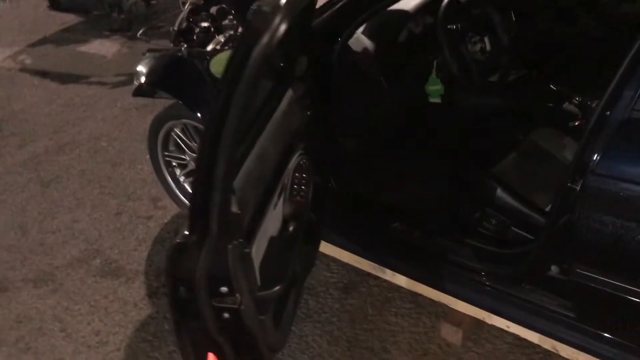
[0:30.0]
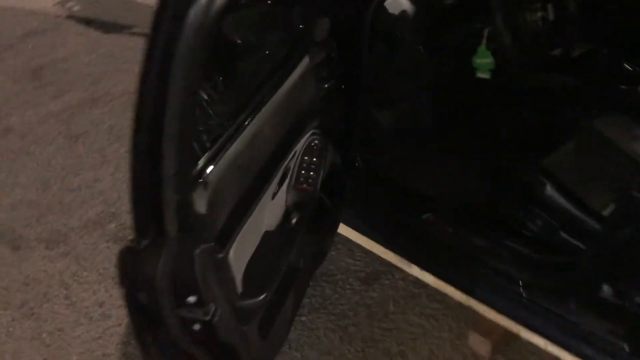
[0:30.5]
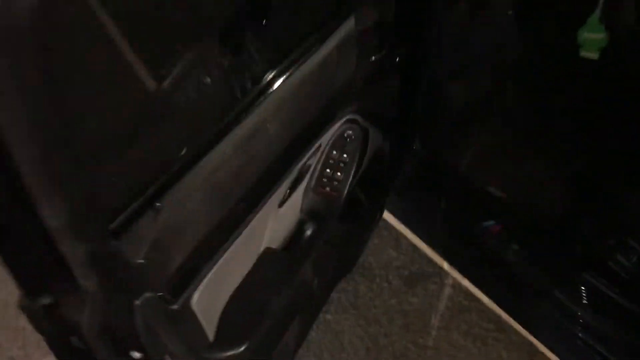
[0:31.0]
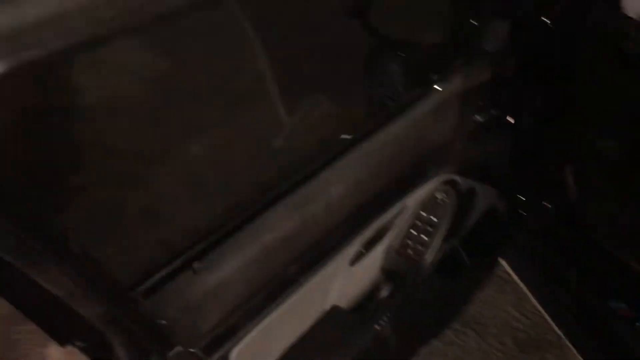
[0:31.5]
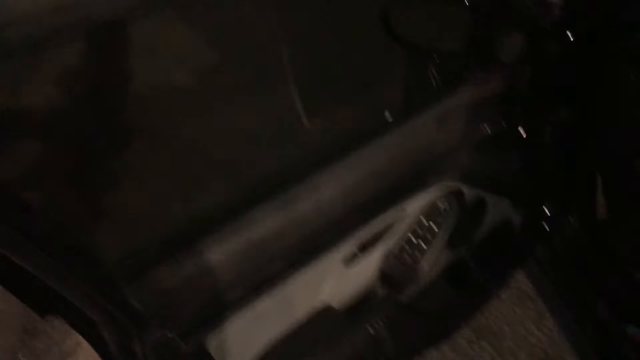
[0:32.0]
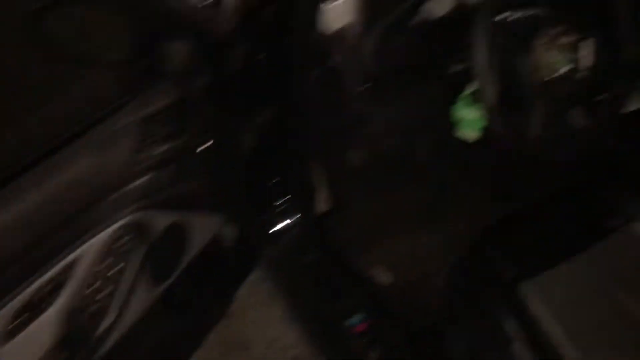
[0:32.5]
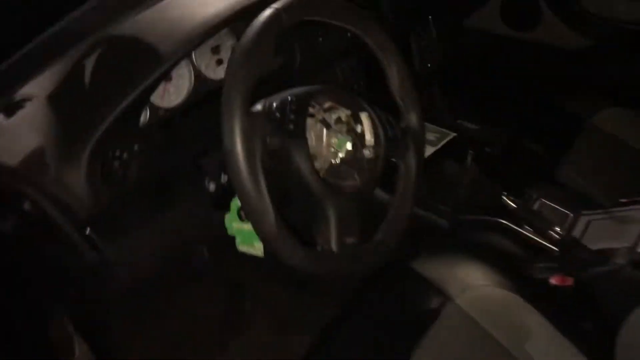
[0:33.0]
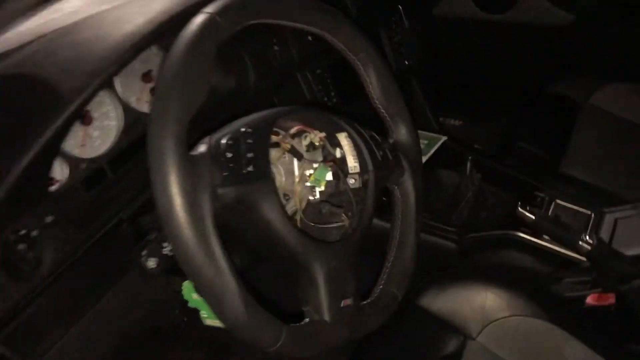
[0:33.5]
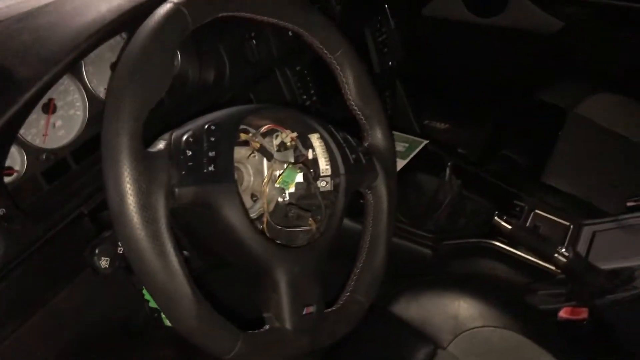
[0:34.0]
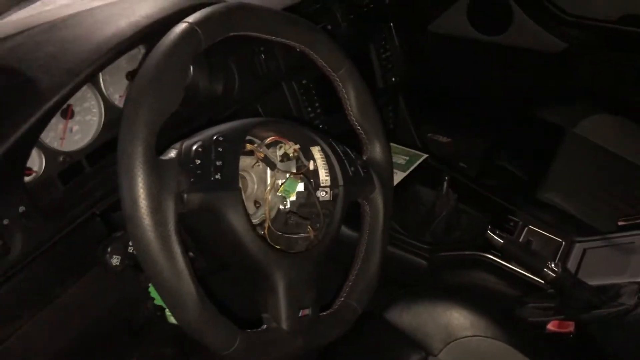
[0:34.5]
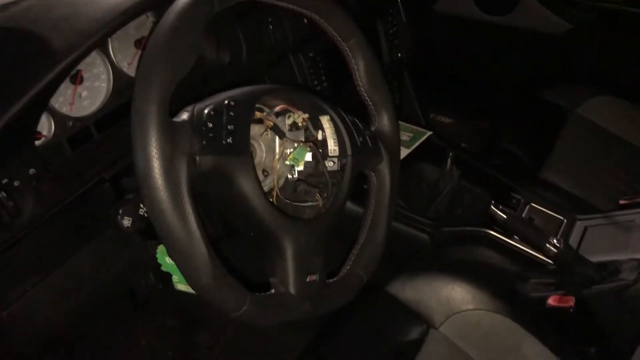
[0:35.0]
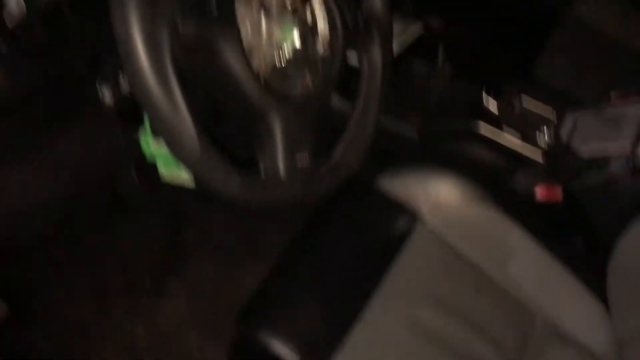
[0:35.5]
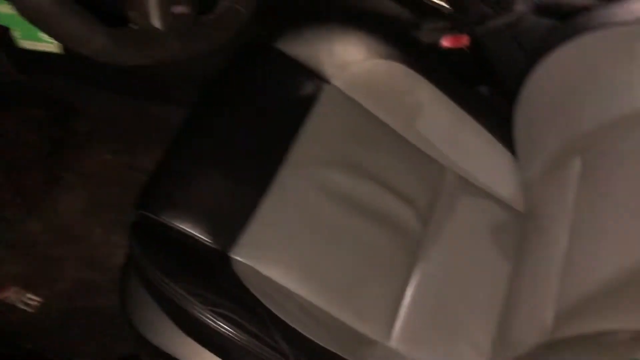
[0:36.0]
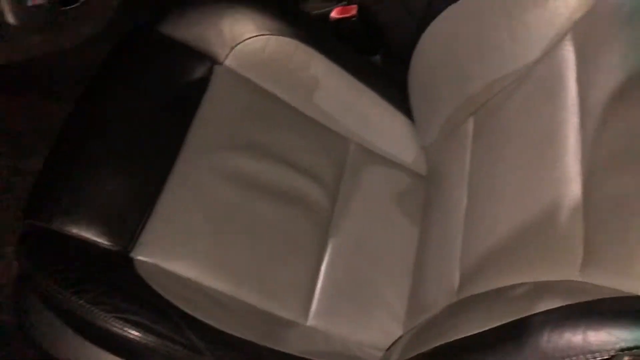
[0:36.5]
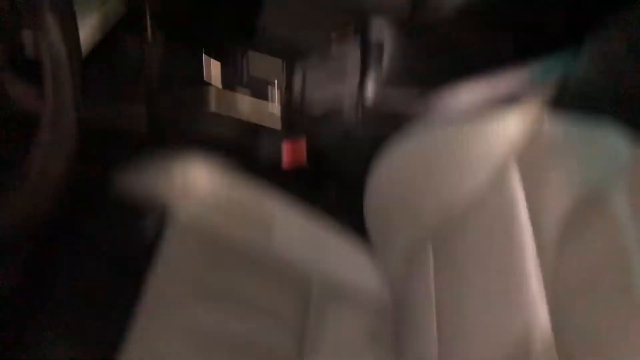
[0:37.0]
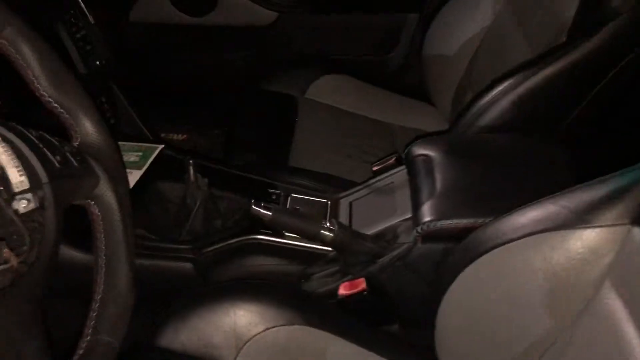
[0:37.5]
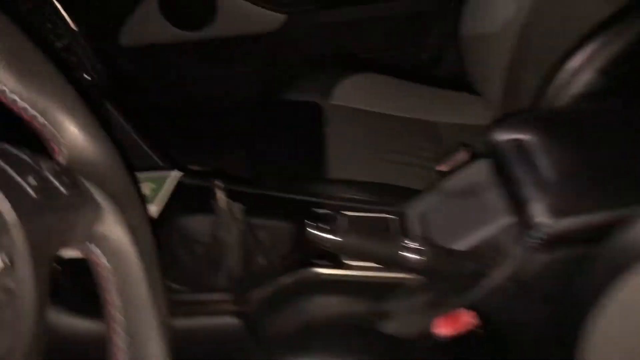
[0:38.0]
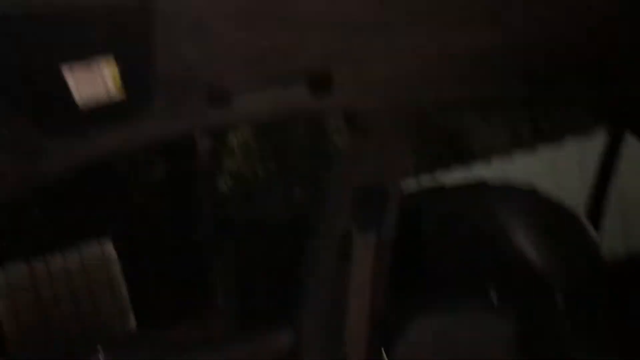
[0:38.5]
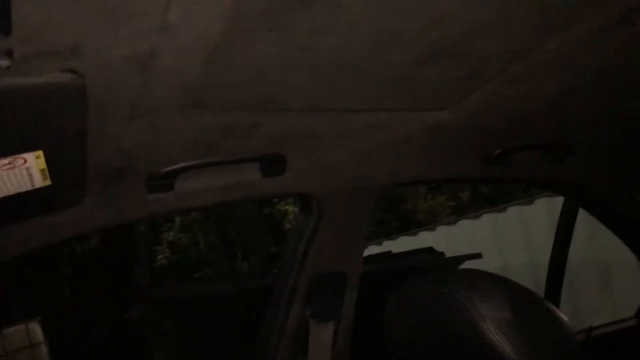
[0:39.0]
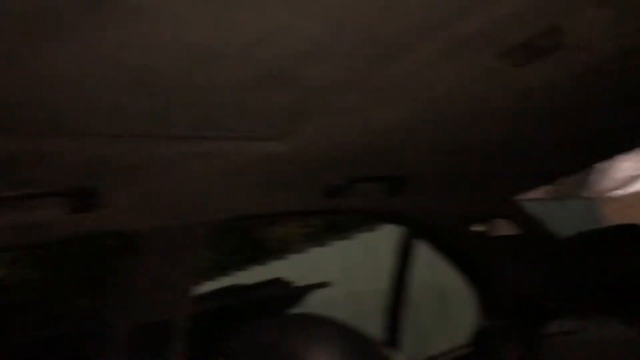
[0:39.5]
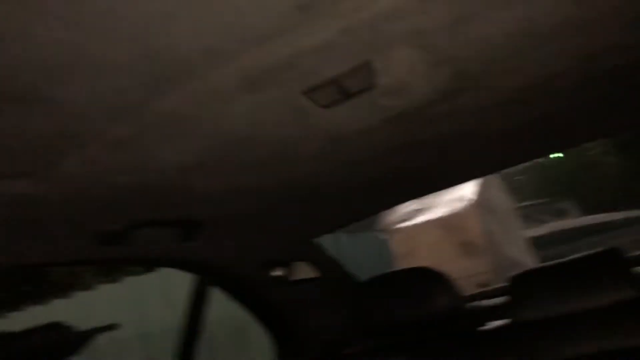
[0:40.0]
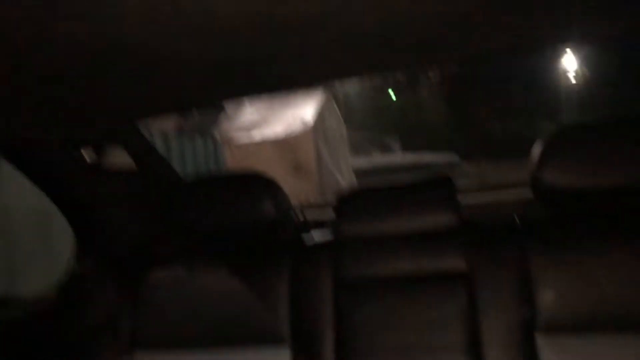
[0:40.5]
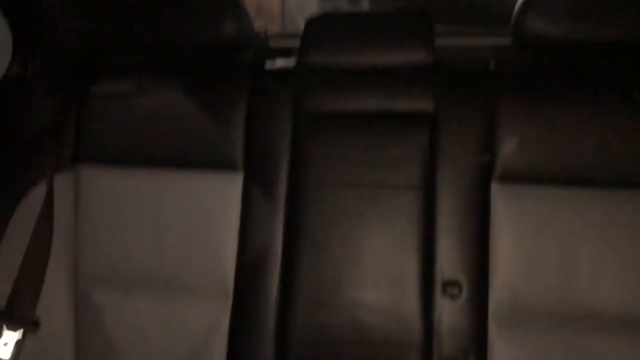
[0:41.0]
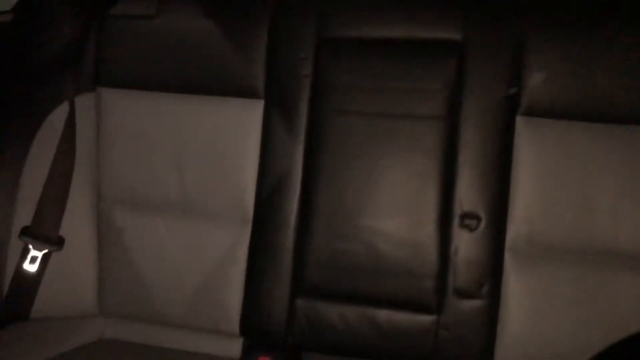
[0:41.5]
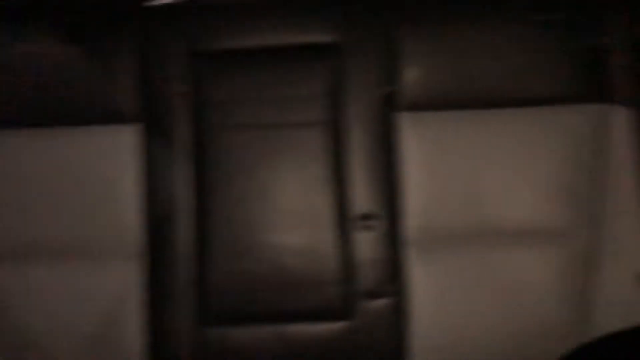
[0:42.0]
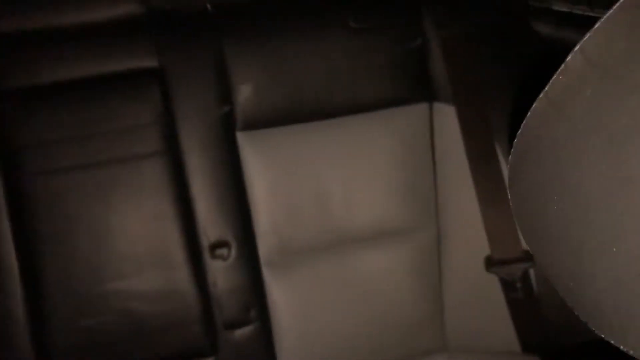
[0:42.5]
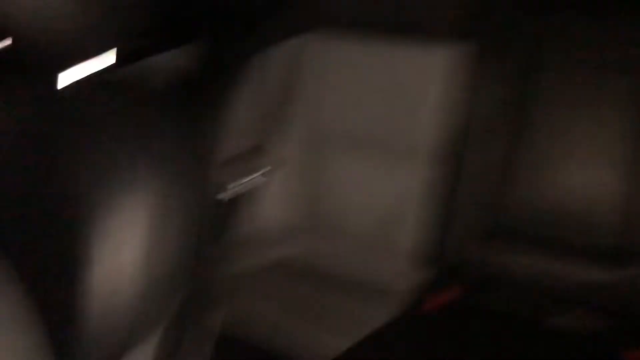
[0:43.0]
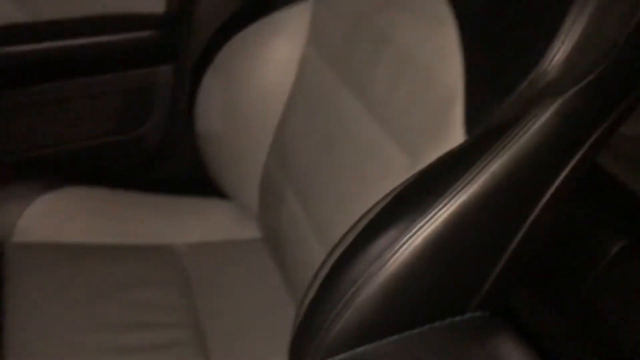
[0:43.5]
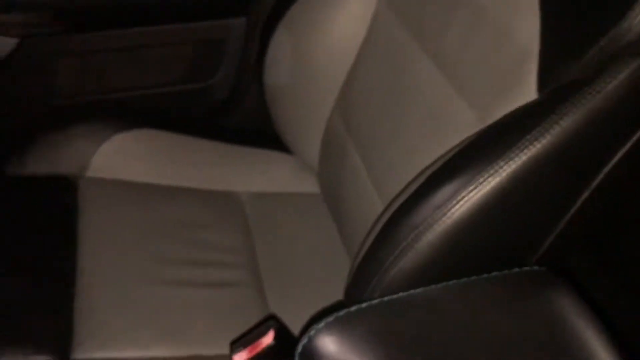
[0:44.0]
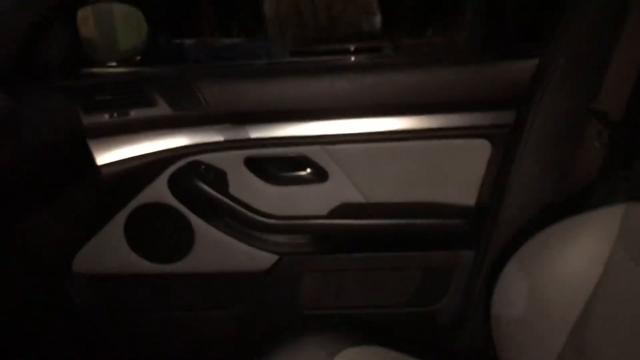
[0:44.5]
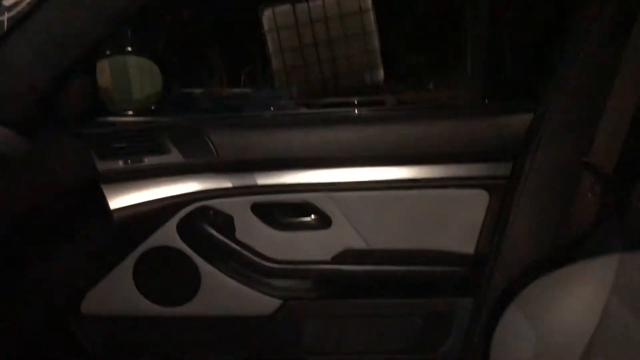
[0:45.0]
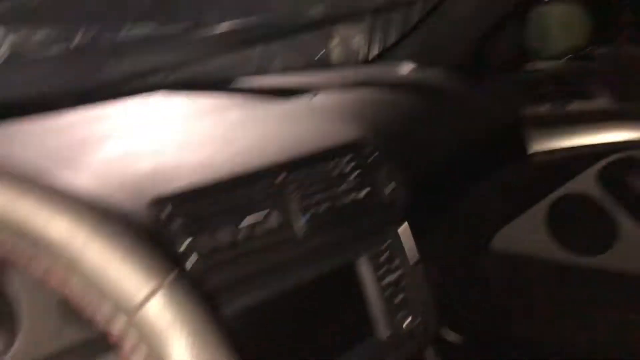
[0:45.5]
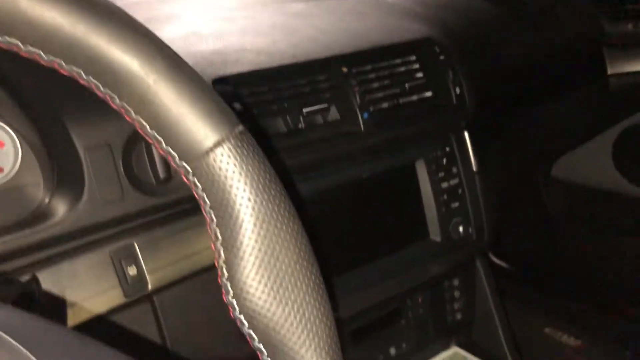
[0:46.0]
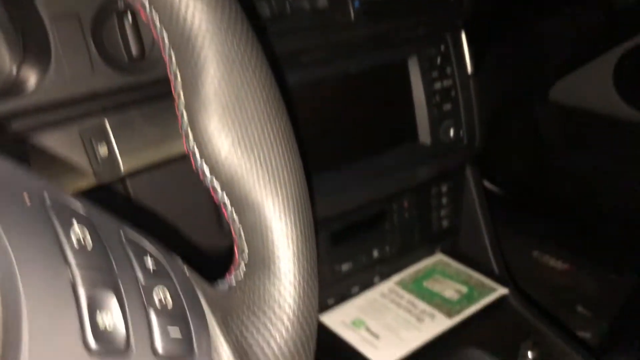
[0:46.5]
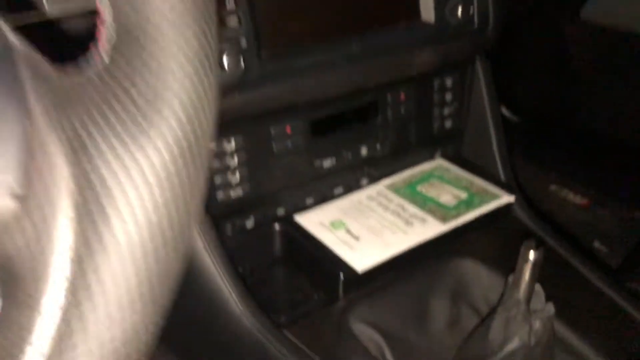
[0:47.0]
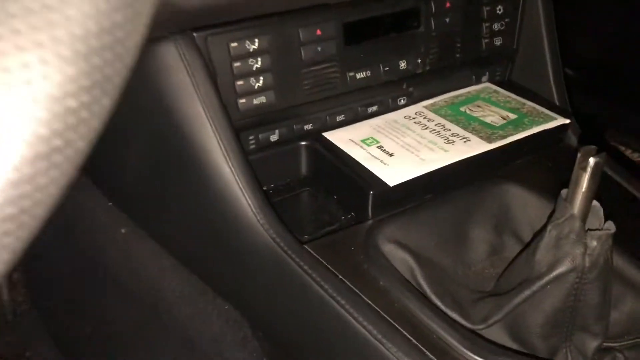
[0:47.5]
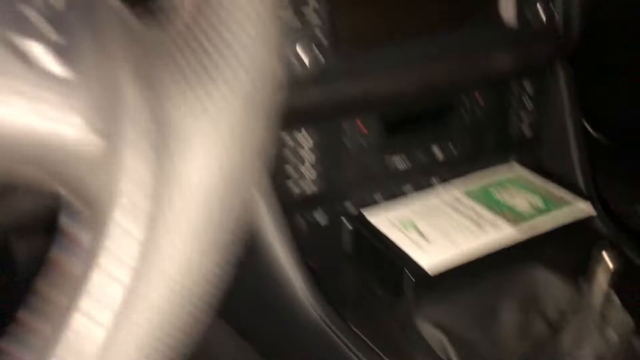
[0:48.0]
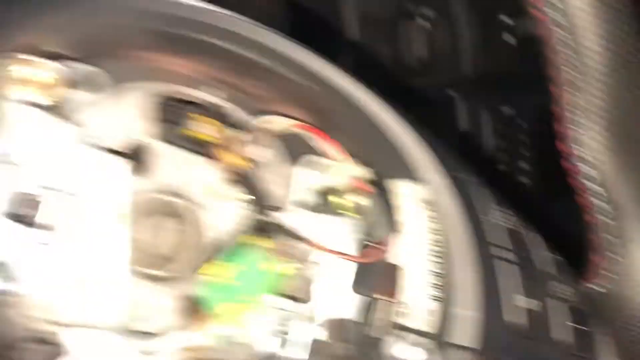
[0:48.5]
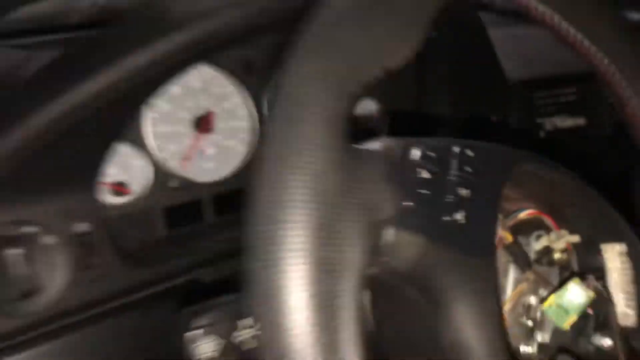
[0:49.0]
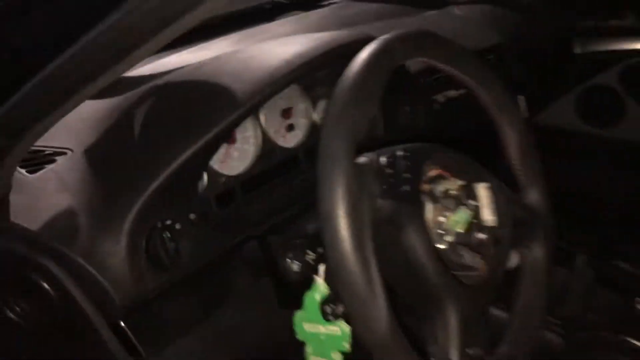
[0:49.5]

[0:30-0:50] The driver side door is open. The vehicle has electrically adjusted mirrors and side mirrors. The center controls, the dashboard and everything else appear intact except the center part of the steering wheel, which houses the airbag and has a hole, apparently because the airbag was activated and removed. The seats are two-tone black and grey, with a black center armrest and a center storage. The roof liner is grey, and the rear seats and door panels are also two-tone black and grey. The shifter knob is missing. The vehicle has a manually operated handbrake. The clusters are analog with a white background, and the media player is digital.